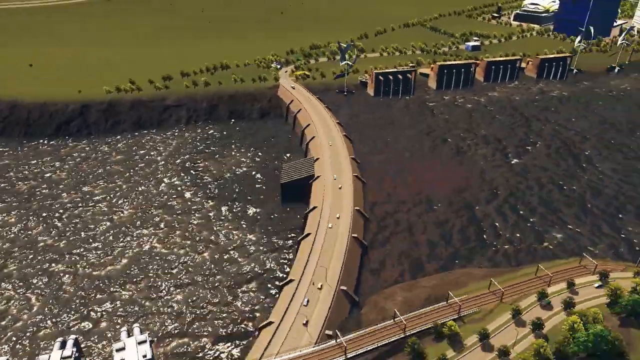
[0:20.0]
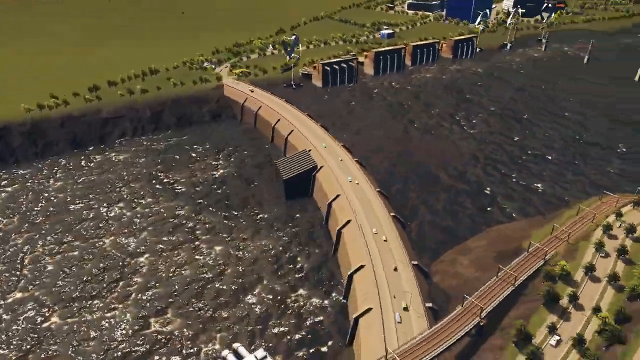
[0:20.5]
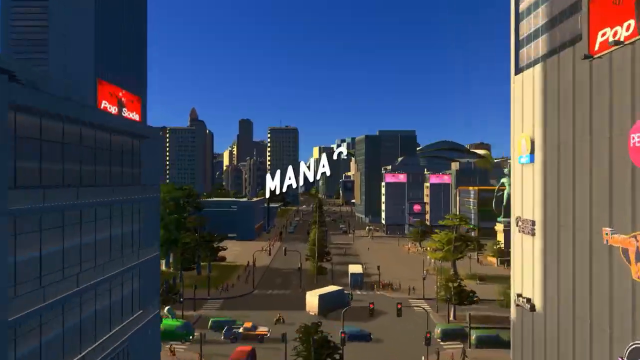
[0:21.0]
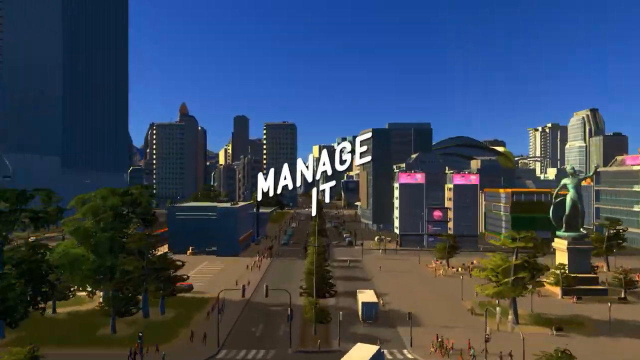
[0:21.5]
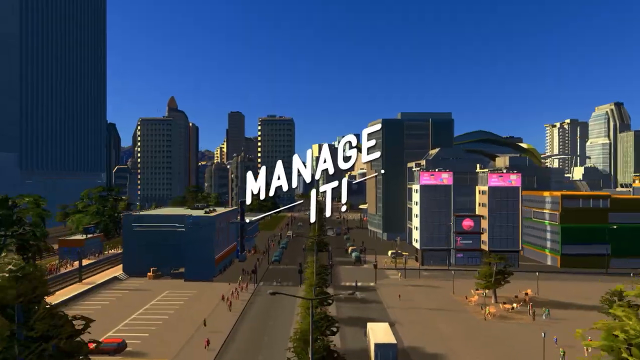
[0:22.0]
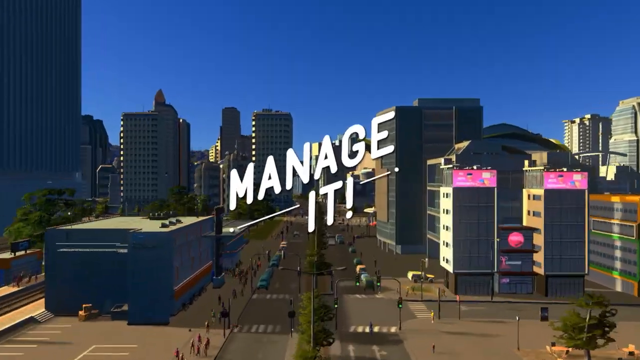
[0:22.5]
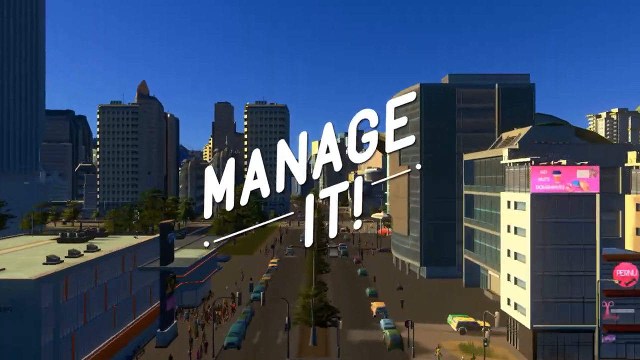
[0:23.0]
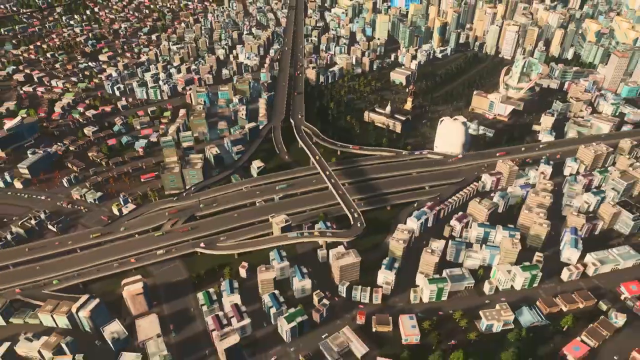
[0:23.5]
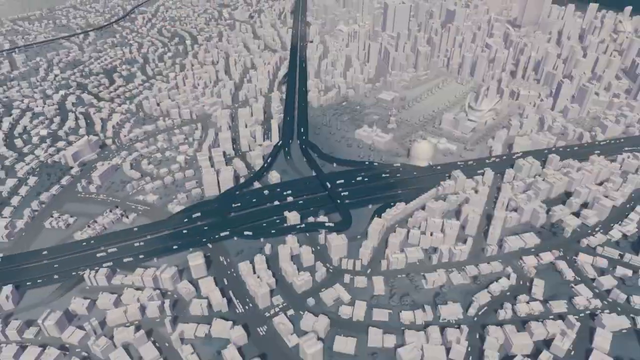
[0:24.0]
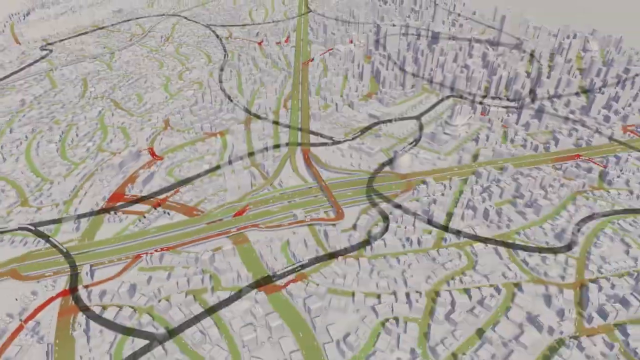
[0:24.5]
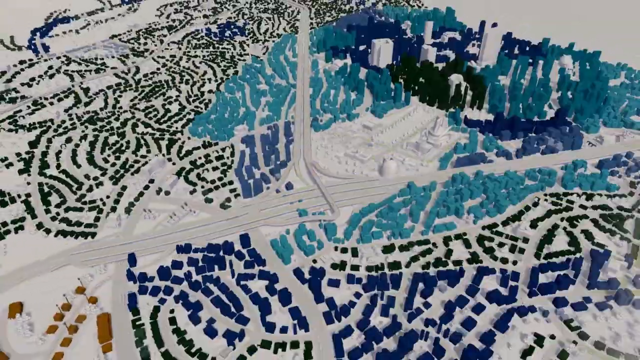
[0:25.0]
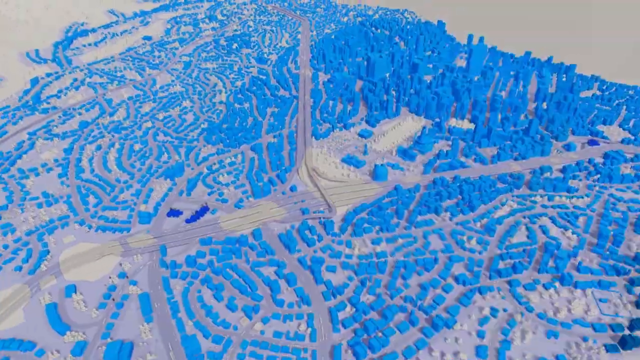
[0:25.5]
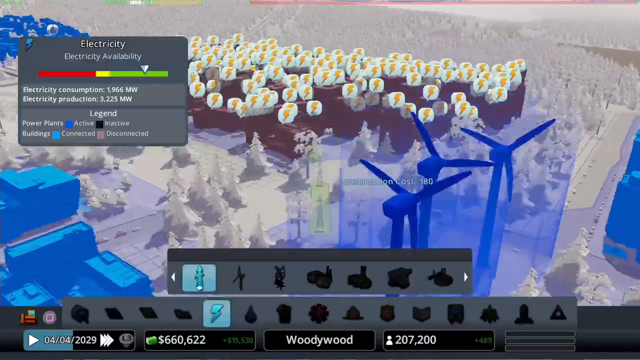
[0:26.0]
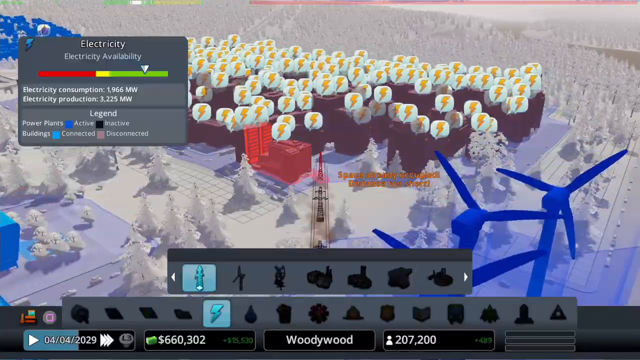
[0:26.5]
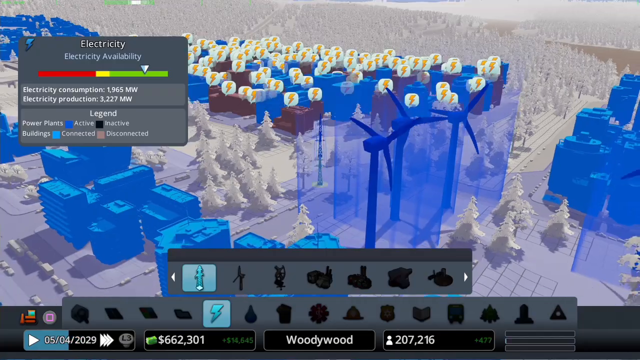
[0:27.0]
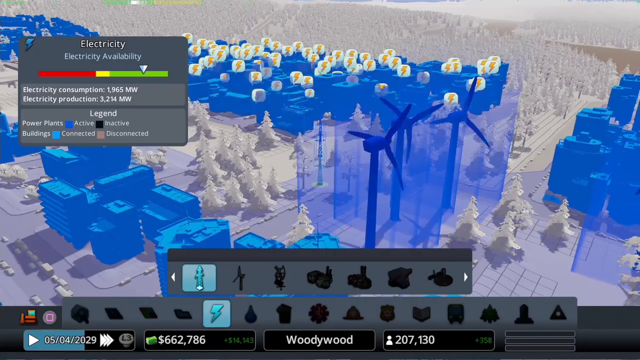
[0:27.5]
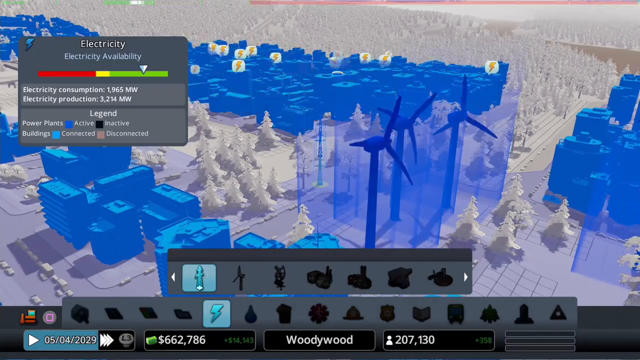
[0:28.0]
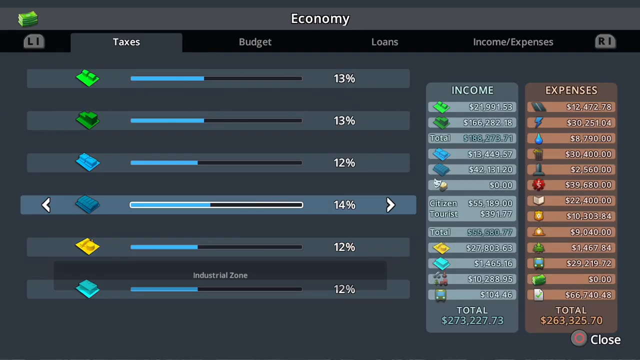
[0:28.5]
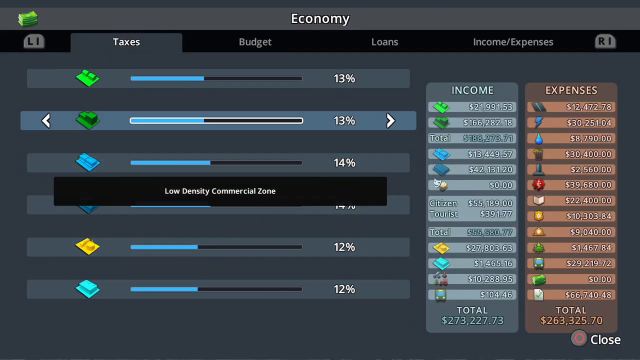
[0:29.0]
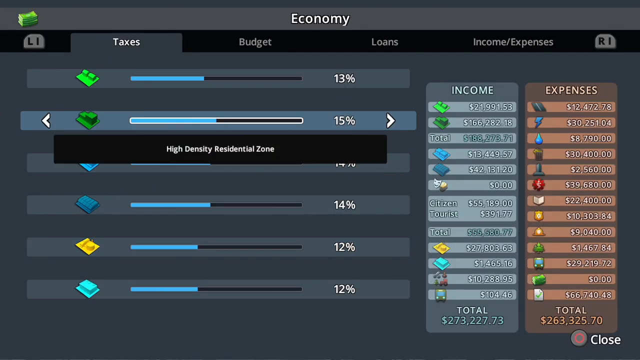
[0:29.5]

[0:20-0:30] A very bright blue sky appears over a building on the right side with signs that say "pop soda", a small pink circle with some white text on it, and an orange sign beneath that. On the left side is a building with some trees and traffic. White text says "manage it" as the camera slowly zooms in. An aerial view of the city shows all of the roads and buildings while the camera zooms out; the image is almost in an infrared effect and keeps changing colors. The scene then transitions to a bunch of little lightning bolts and what appear to be blue windmills. A gray box says "electricity availability" with a red, yellow and green bar, and white text says "electricity consumption 1,966 MW, electricity production 3,225 MW". There is a legend for power plants active and inactive and buildings connected and disconnected, with a bunch of different settings to choose from. Another settings feature covers the economy, with taxes, budget, loans, and income and expenses, each with a bunch of different options.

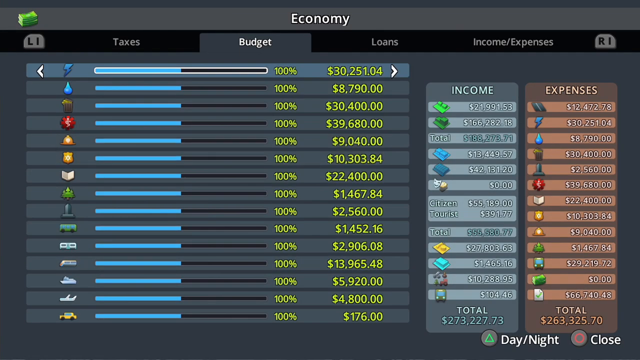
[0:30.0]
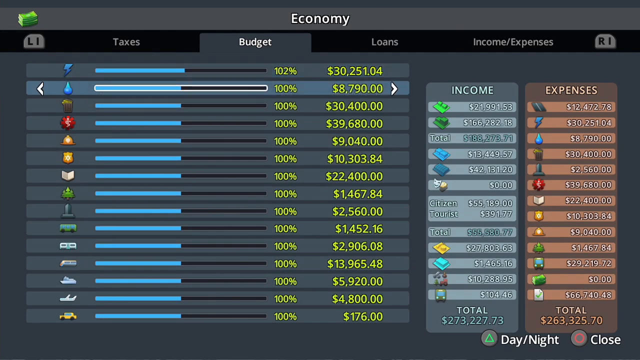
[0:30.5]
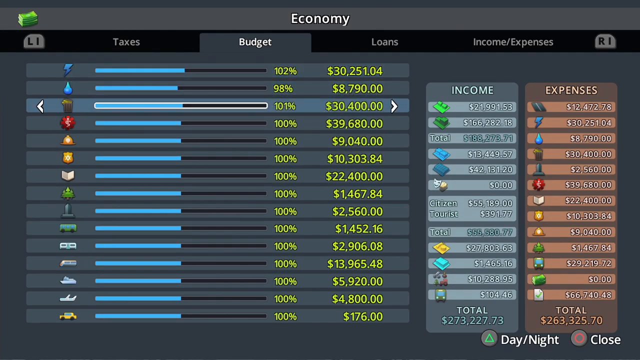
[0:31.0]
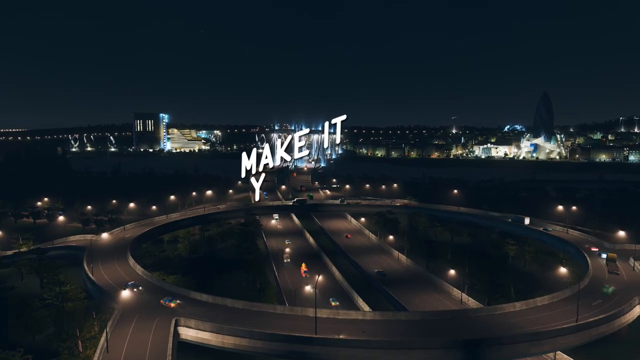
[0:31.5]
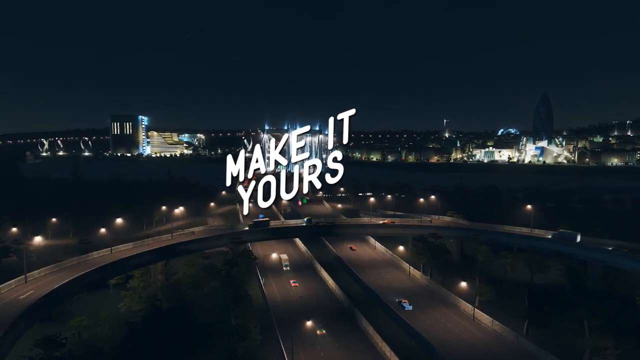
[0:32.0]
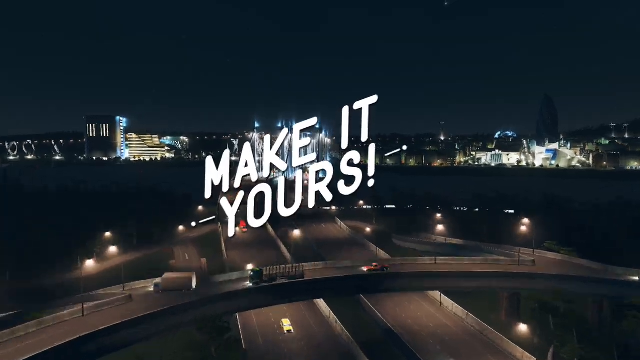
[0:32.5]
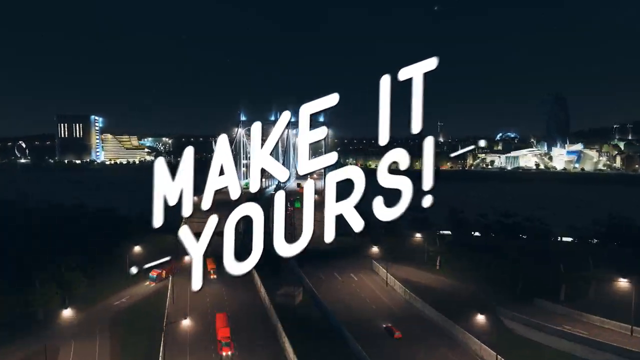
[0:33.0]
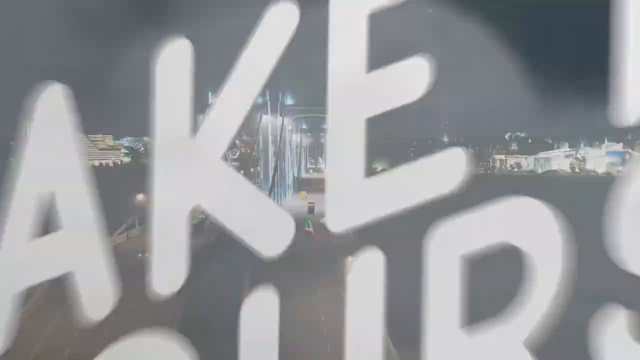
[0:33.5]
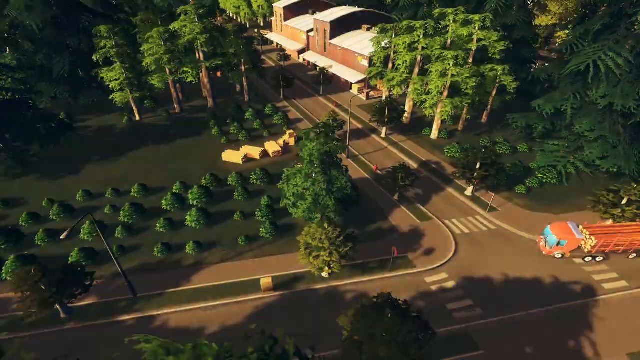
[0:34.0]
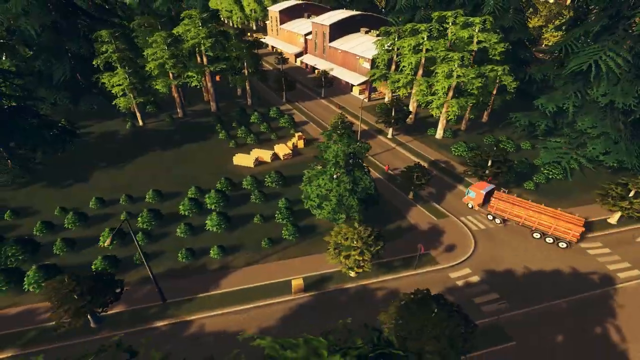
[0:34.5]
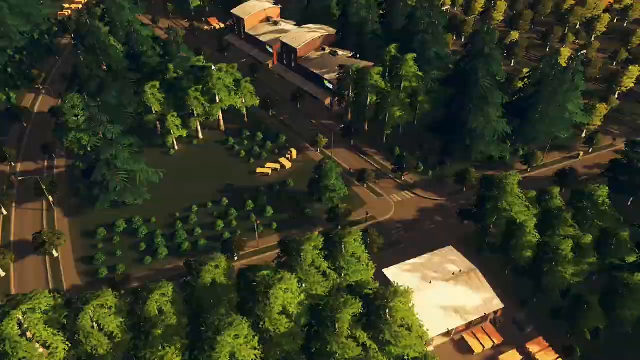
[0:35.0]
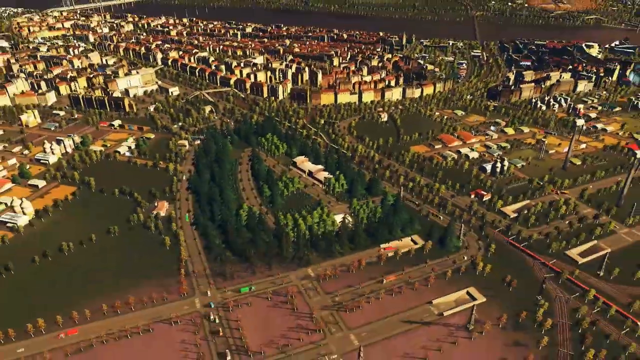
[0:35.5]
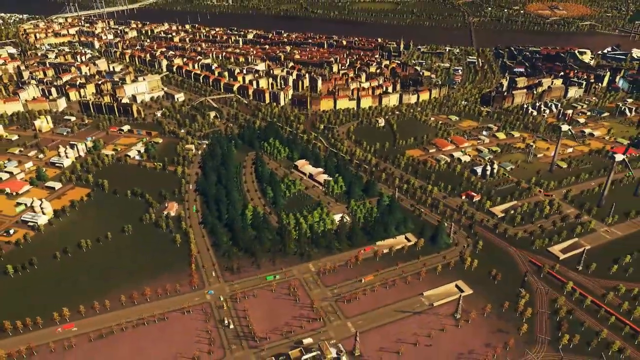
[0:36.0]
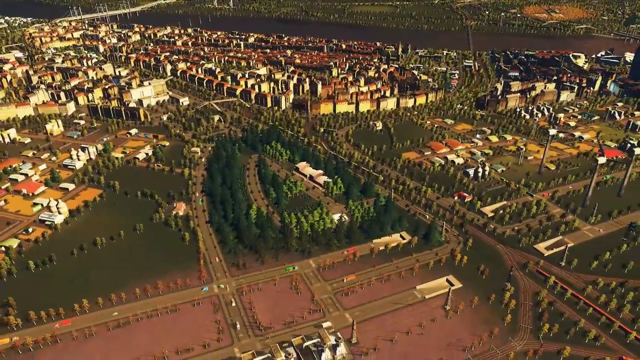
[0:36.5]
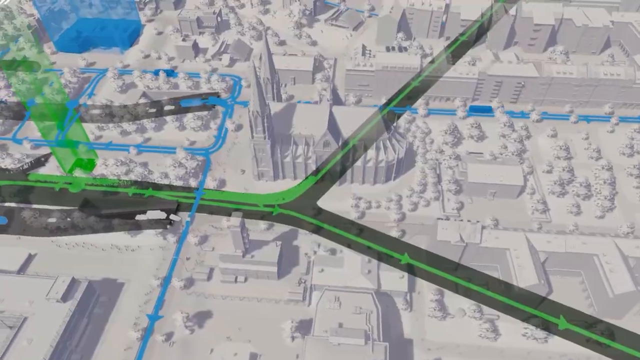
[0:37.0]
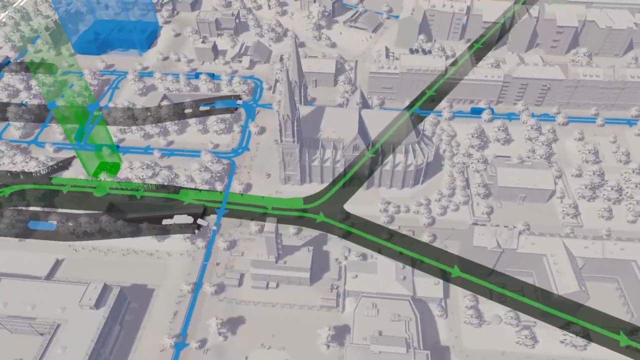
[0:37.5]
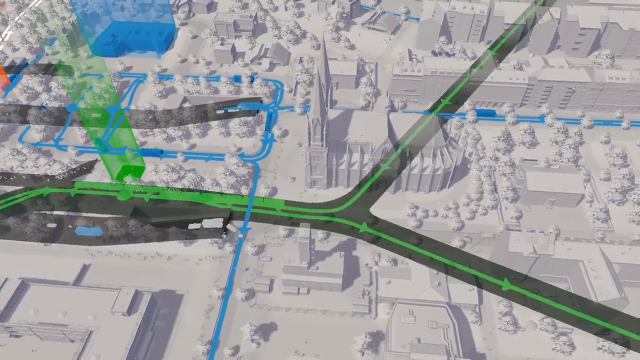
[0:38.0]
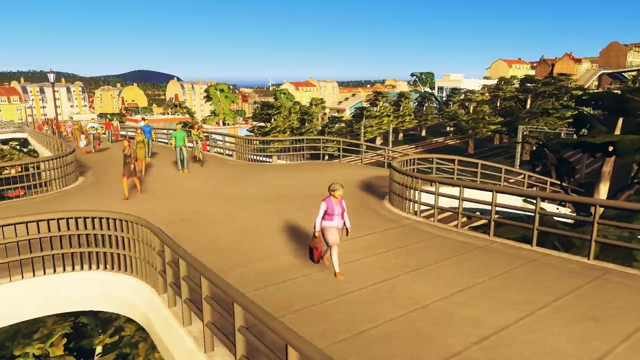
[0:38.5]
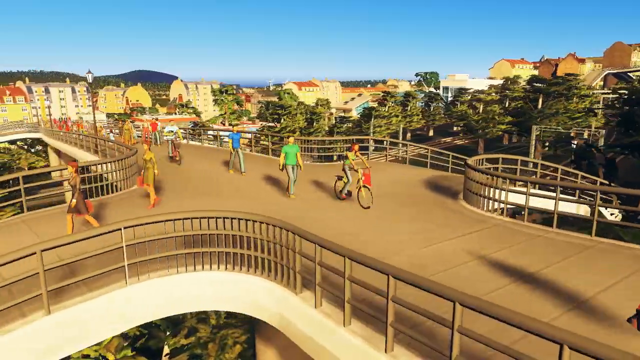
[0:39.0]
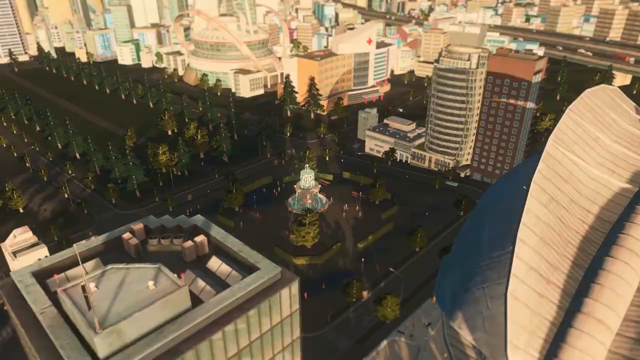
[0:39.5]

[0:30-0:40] Under a dark sky, a bunch of little lights surround what looks like a roundabout, and white text says "make it yours" while the camera zooms in rather quickly. A bunch of traffic and other buildings in the distance have a few lights throughout the scene. The camera continues to zoom in, then the scene changes to a country area with a bunch of big and small trees and a very long truck going down a road with some buildings, before the view zooms out to a full aerial view of the entire town. Another scene shows a white city with green and black roads and some blue colors throughout. A bridge follows with a bunch of people walking down it and some on bikes, then another scene shows people. Quite a lot of features for making things in the game are shown.